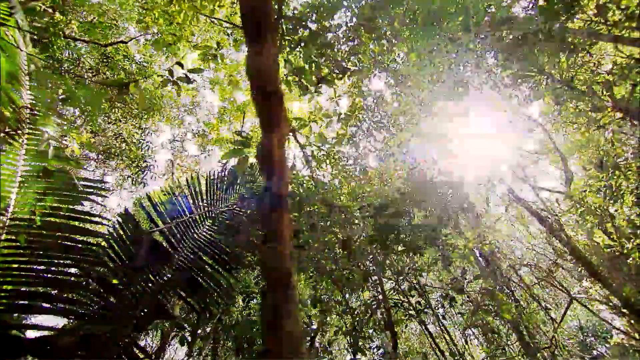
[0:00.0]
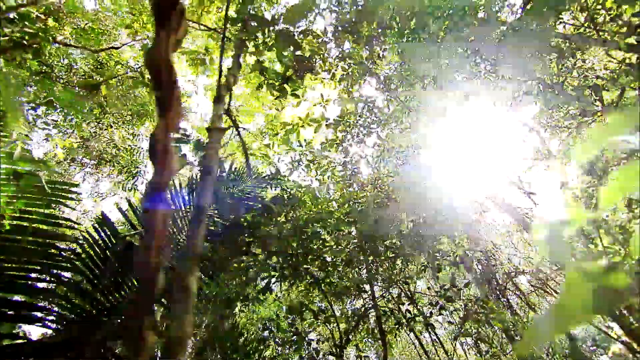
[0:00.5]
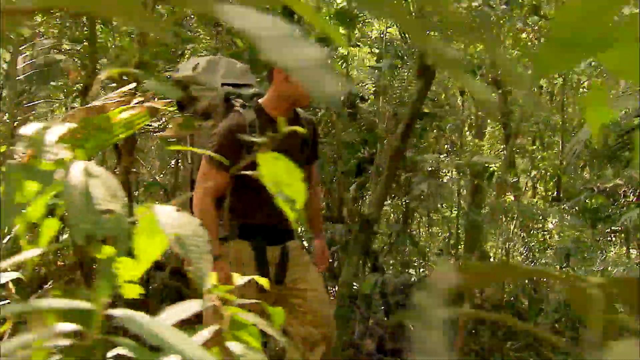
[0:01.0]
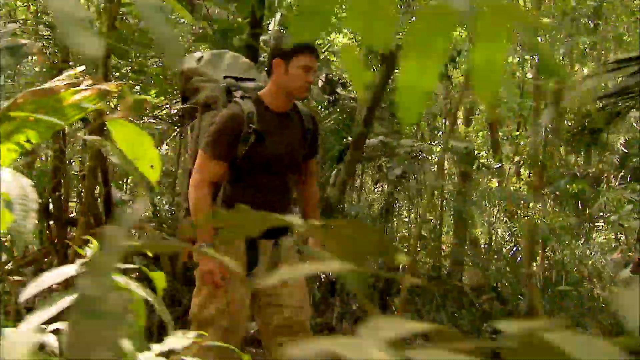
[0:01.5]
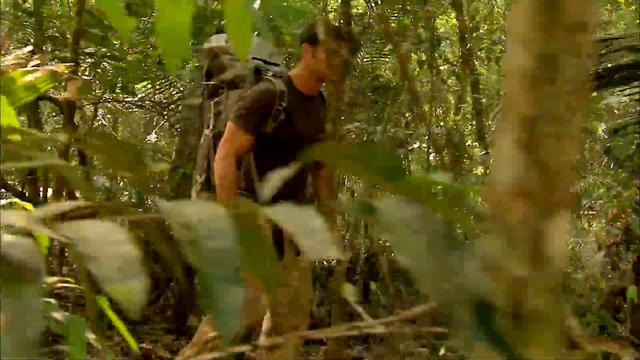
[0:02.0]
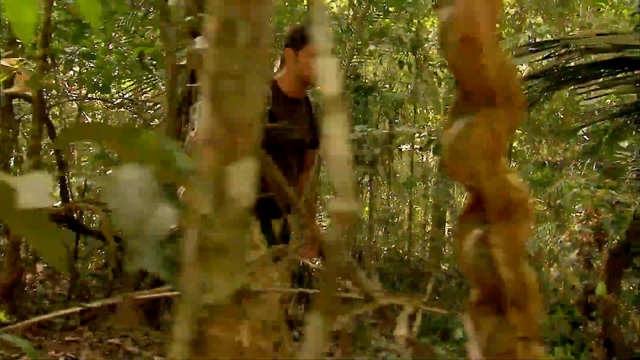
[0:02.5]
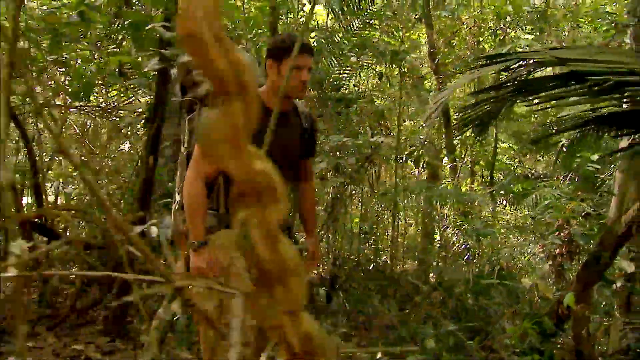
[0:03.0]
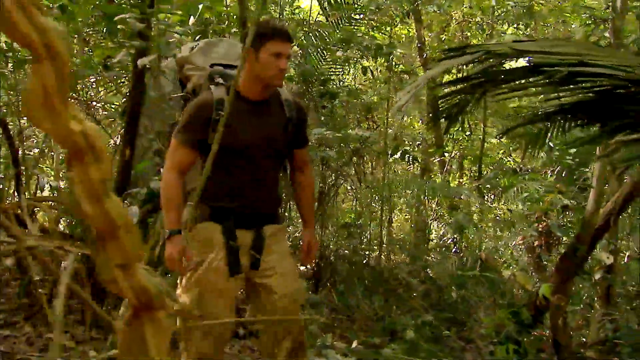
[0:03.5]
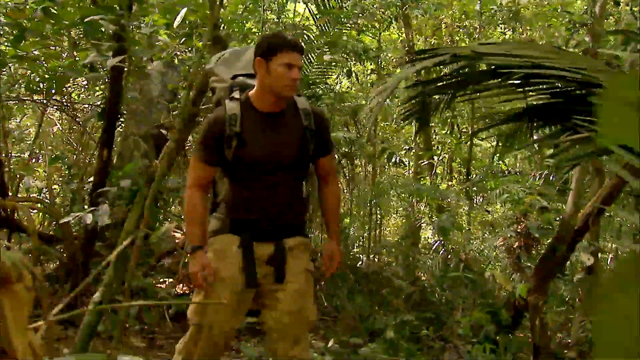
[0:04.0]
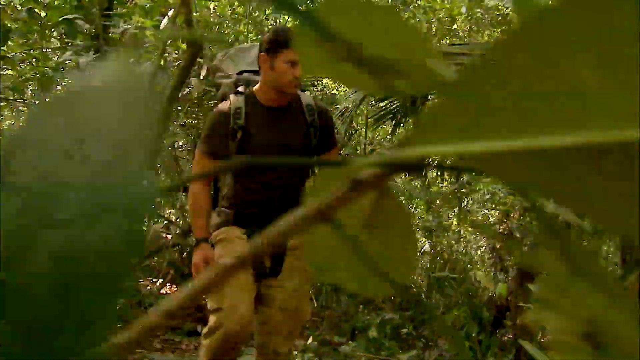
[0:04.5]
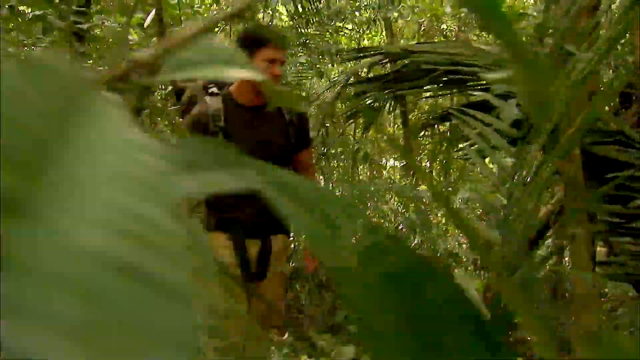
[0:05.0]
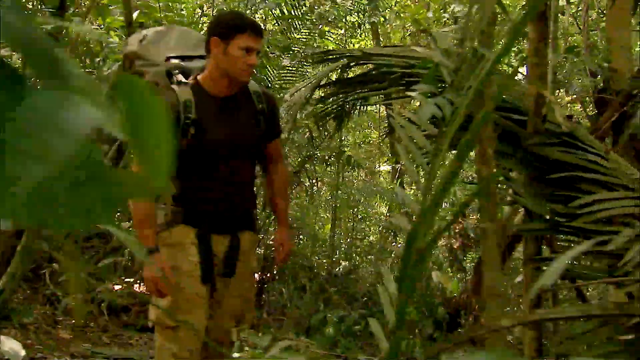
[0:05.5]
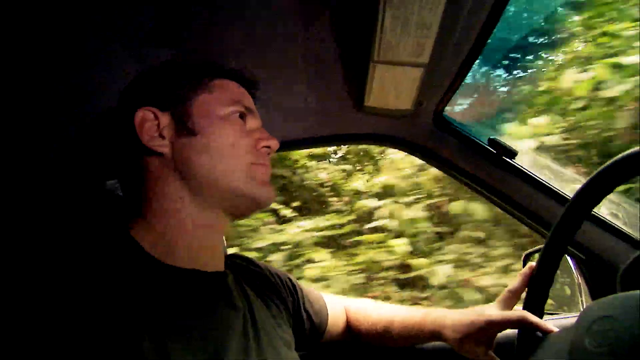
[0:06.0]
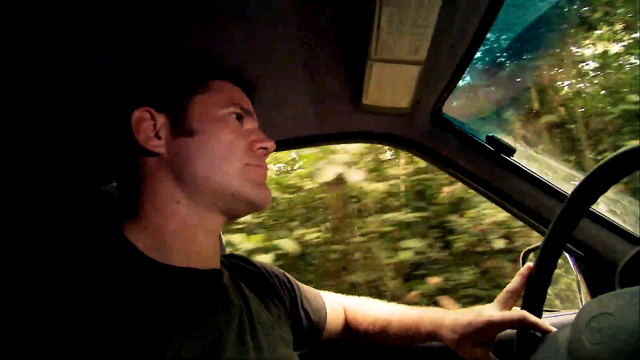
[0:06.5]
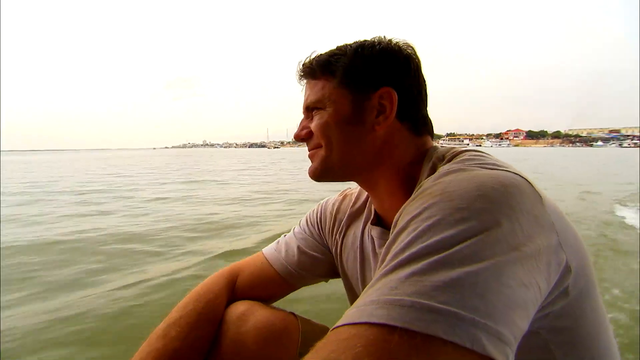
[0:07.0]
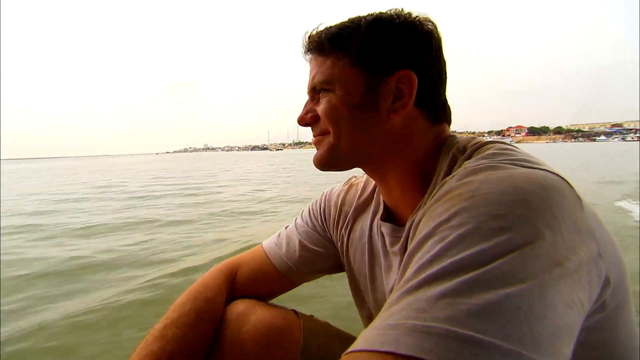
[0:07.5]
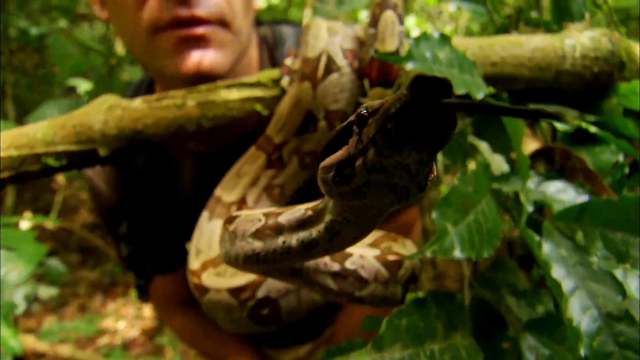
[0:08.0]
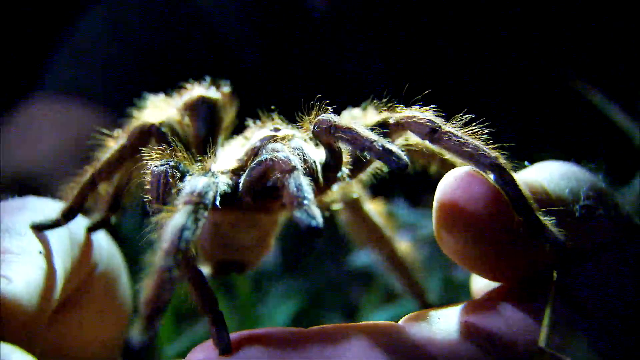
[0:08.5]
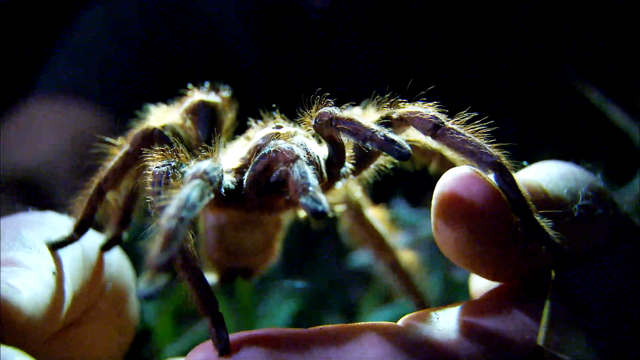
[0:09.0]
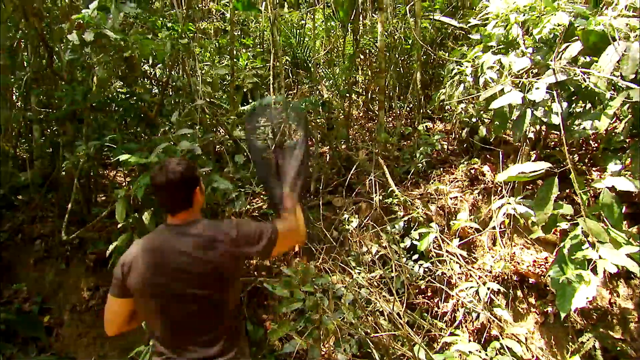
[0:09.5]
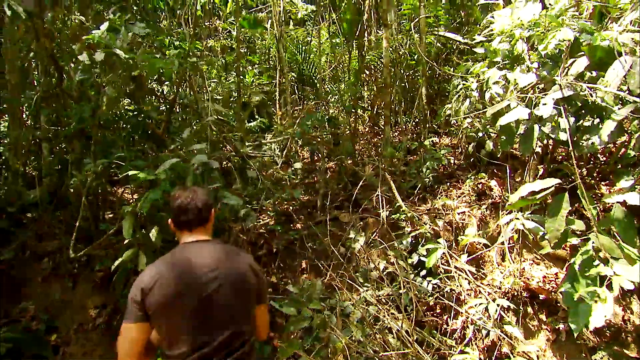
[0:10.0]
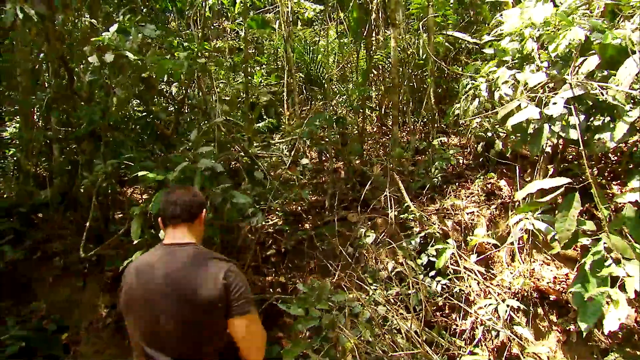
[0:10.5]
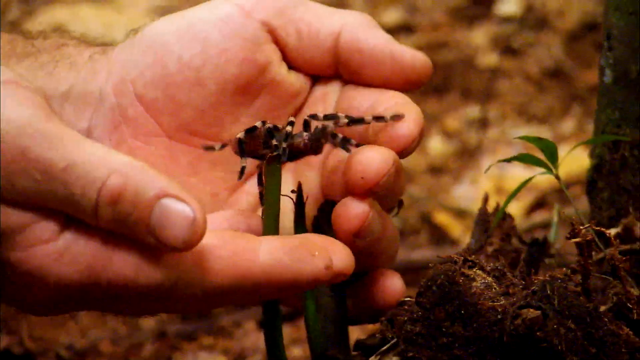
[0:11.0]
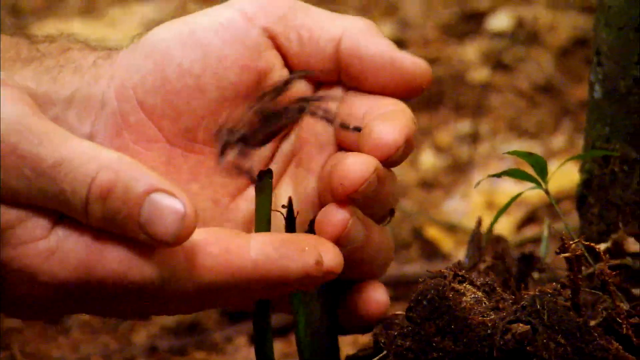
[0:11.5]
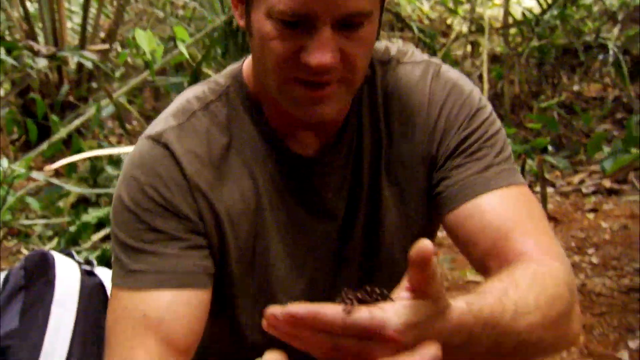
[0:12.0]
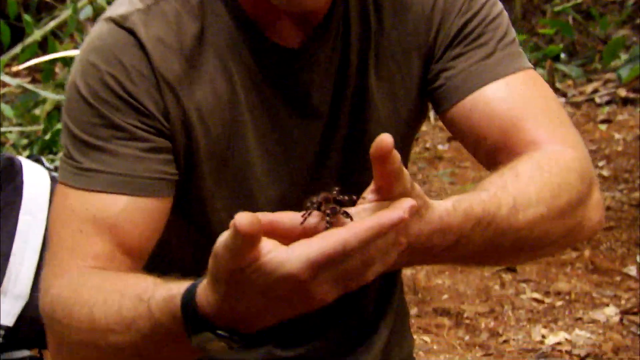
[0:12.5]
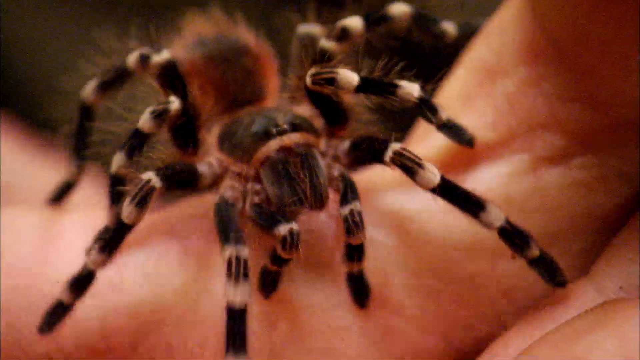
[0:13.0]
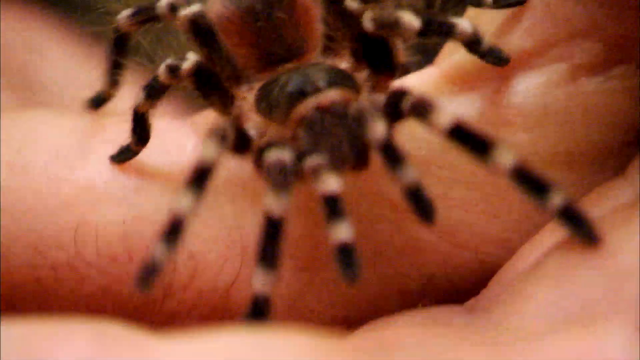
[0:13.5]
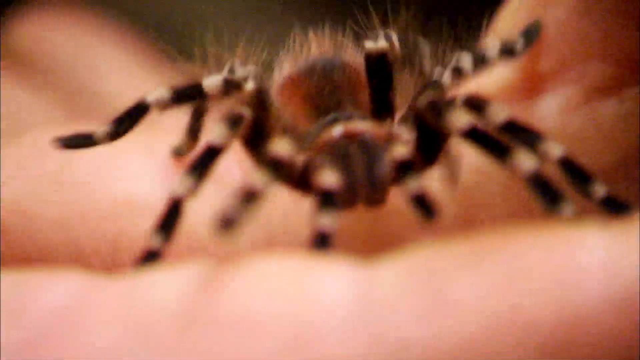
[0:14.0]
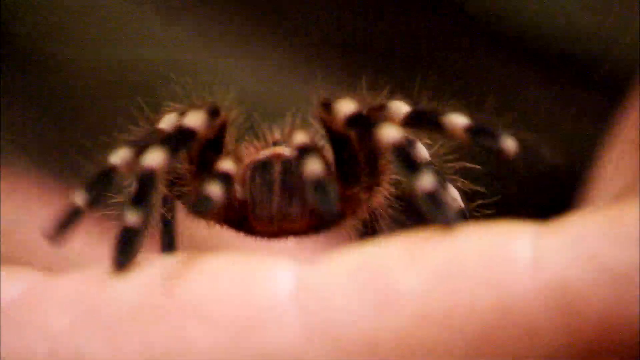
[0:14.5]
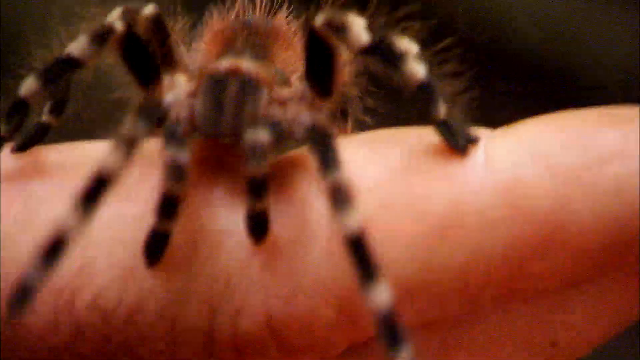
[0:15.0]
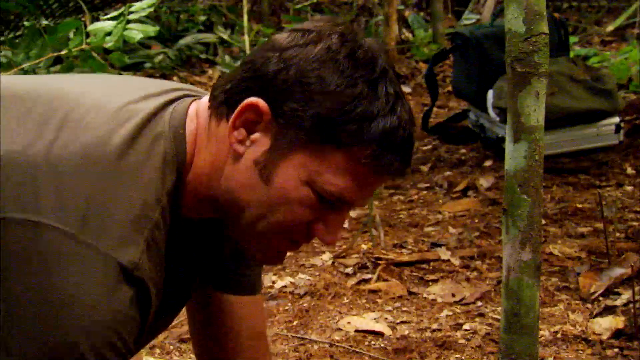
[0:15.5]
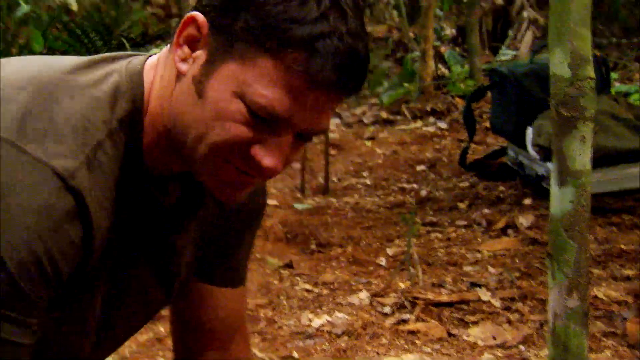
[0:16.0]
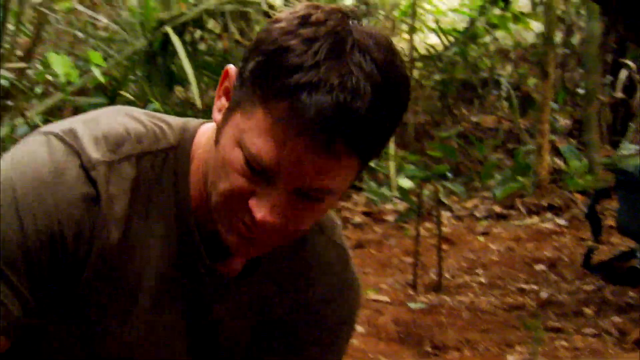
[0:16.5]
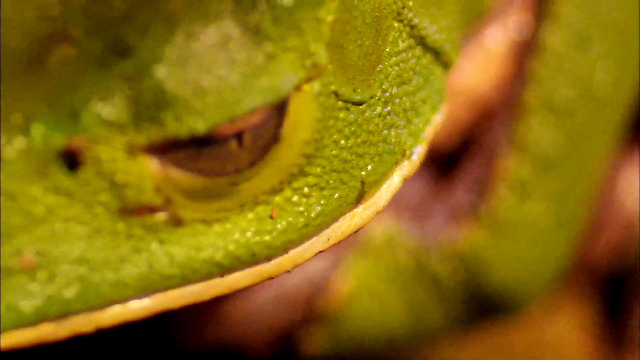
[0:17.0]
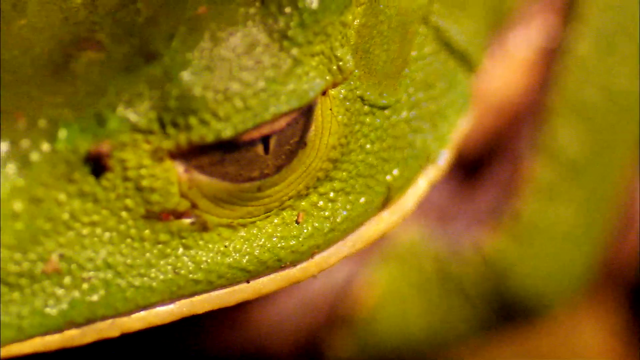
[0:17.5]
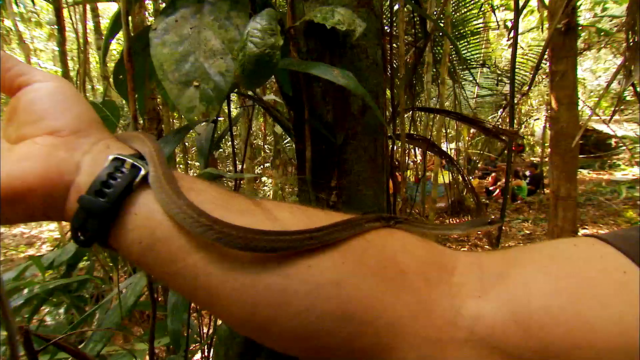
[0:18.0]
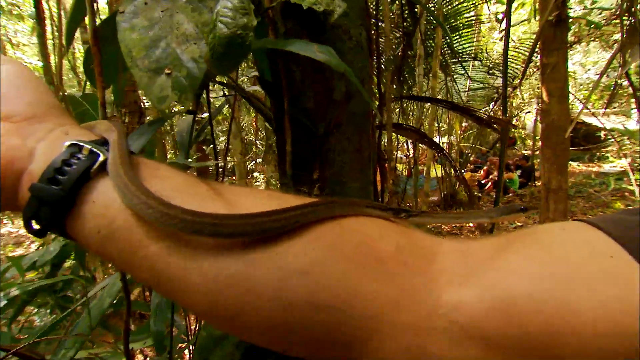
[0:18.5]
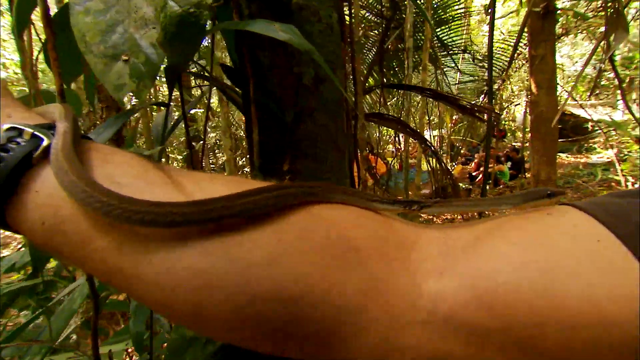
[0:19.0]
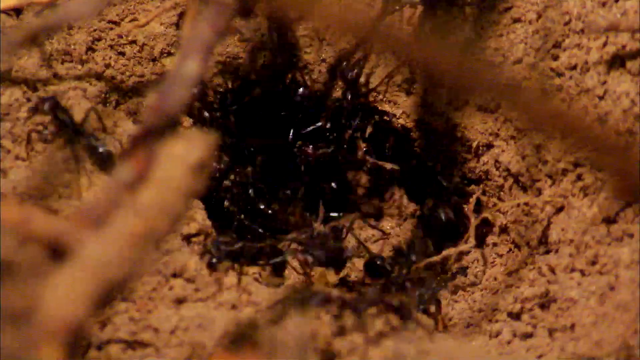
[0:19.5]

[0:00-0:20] Footage of a forest area opens with an upward shot looking through the trees, with the sun on the right side. It cuts to a side view of a man wearing a backpack and a black shirt walking through what looks like a forest area; he appears to be walking quite cautiously. Next comes a side view of the same man driving, followed by more side-view footage of him on what looks like a boat, with water visible under him. The video then cuts to what looks like the man right behind a snake, which sort of faces toward the camera, and then to what looks like a hand holding some kind of large tarantula. The man is then seen from the back, swiping a net forward with his right hand, apparently trying to catch something. A tiny spider is shown sort of between his hands, which are held together. In more footage with the spider, he holds his hands palms up to show the camera while the spider crawls between them.